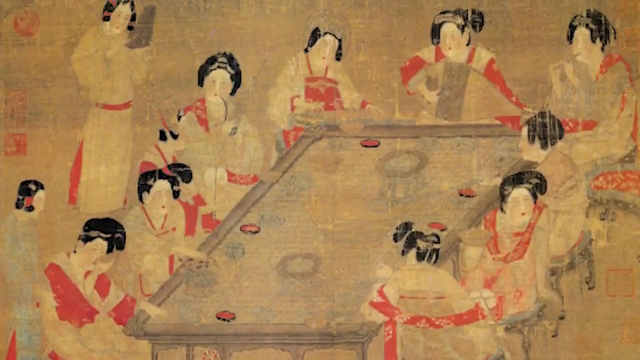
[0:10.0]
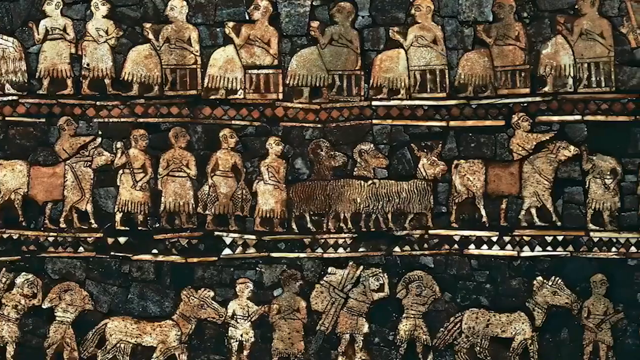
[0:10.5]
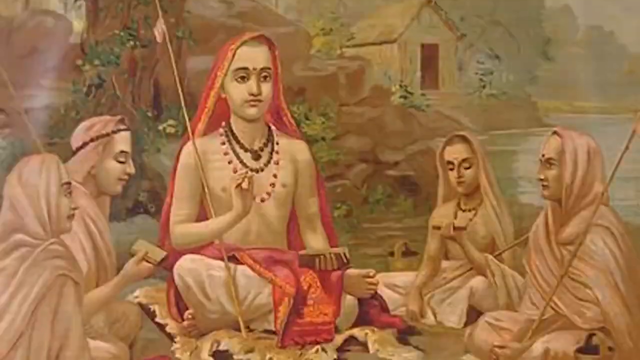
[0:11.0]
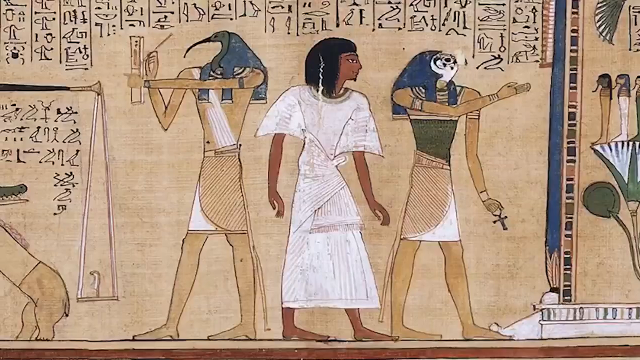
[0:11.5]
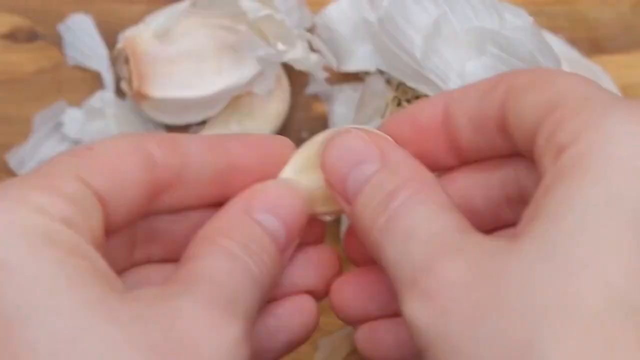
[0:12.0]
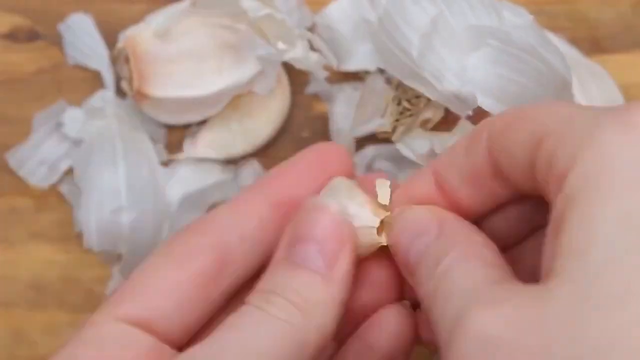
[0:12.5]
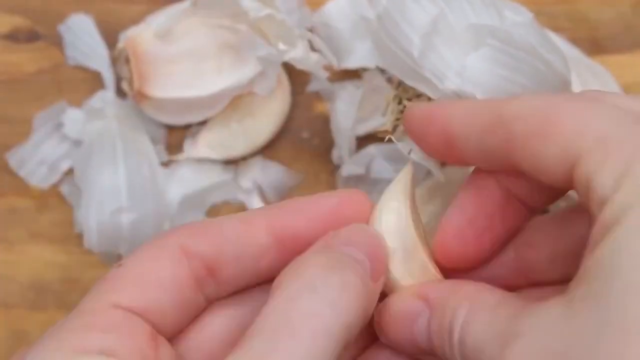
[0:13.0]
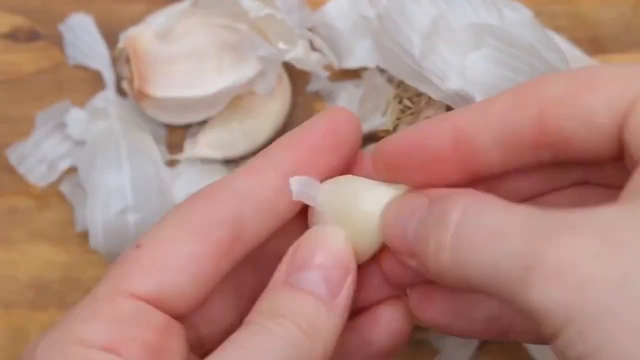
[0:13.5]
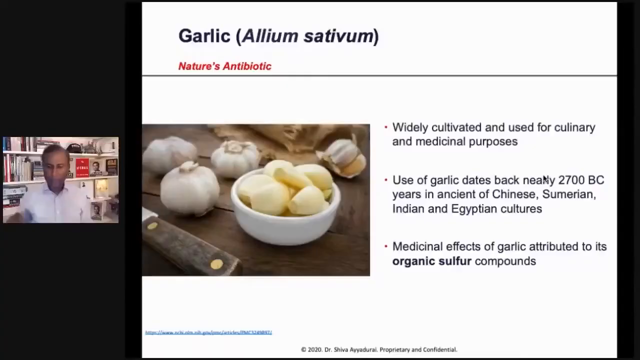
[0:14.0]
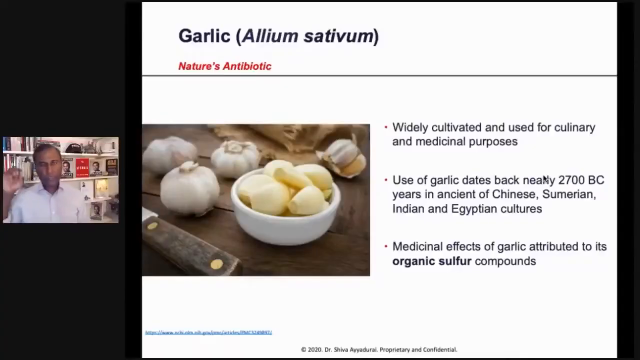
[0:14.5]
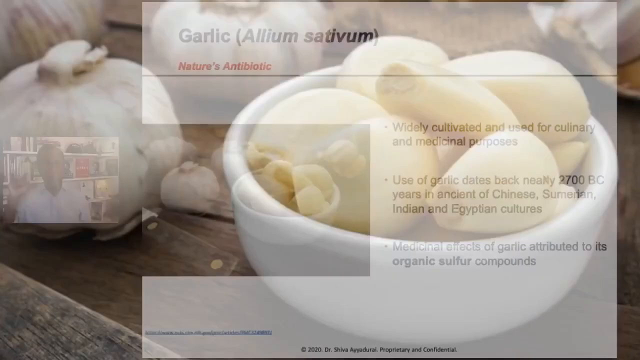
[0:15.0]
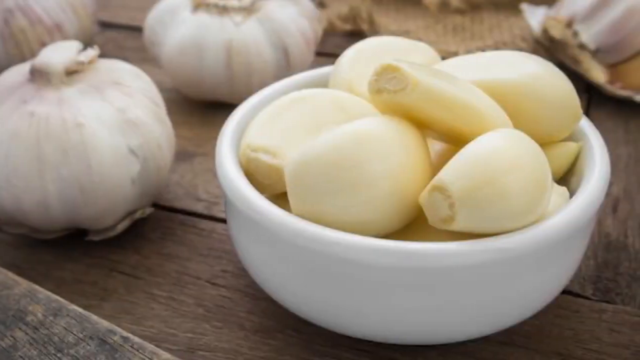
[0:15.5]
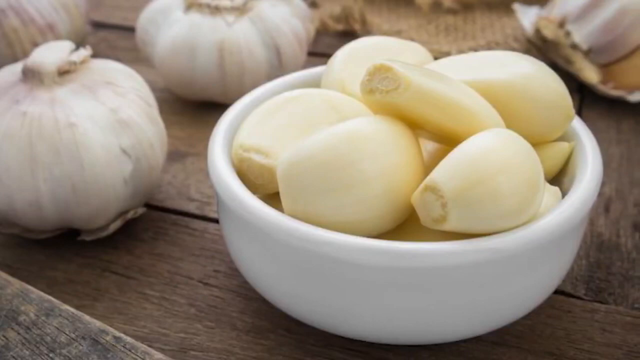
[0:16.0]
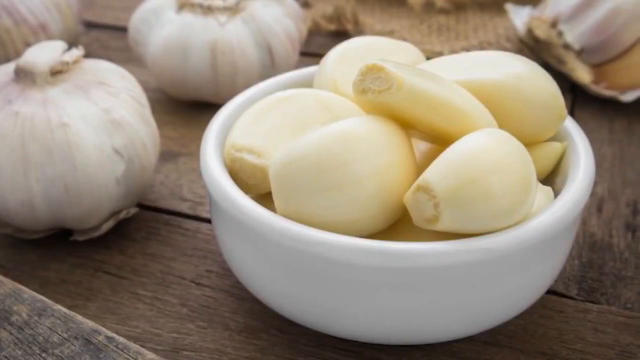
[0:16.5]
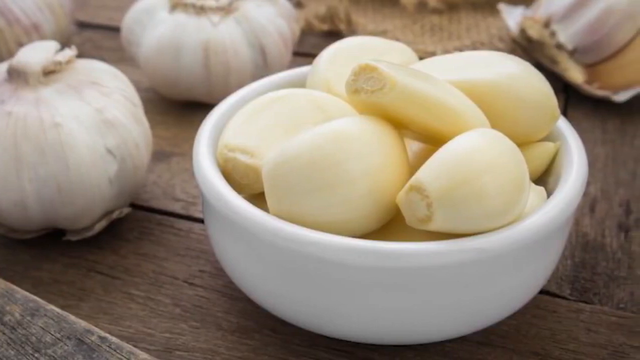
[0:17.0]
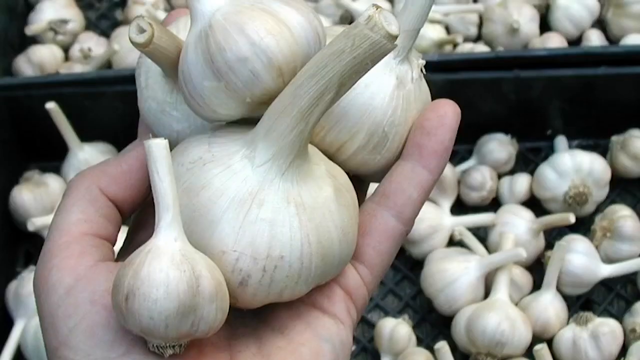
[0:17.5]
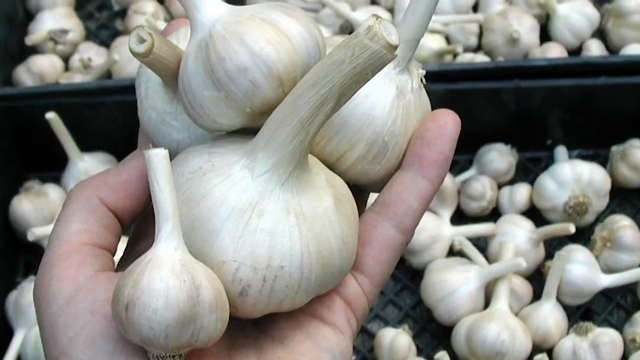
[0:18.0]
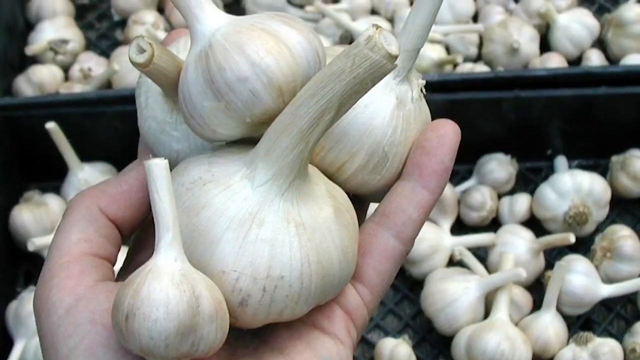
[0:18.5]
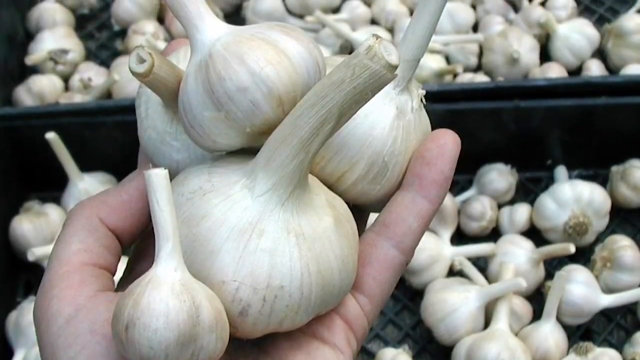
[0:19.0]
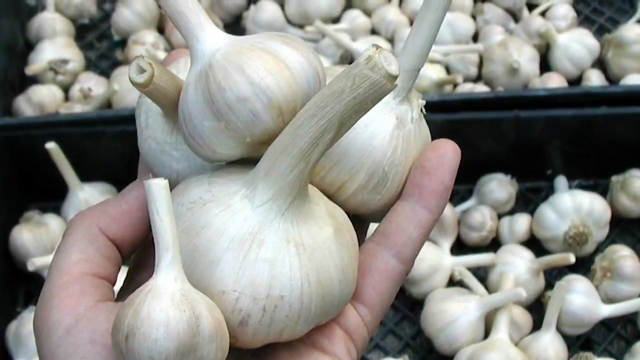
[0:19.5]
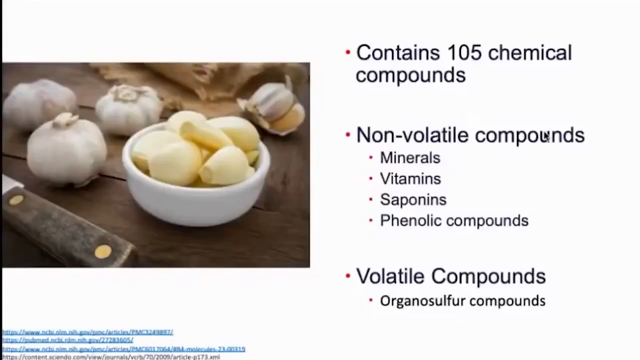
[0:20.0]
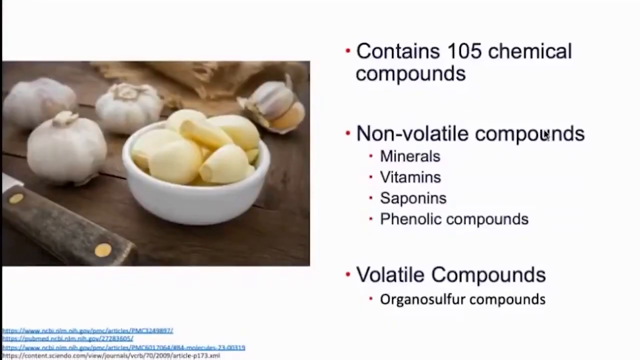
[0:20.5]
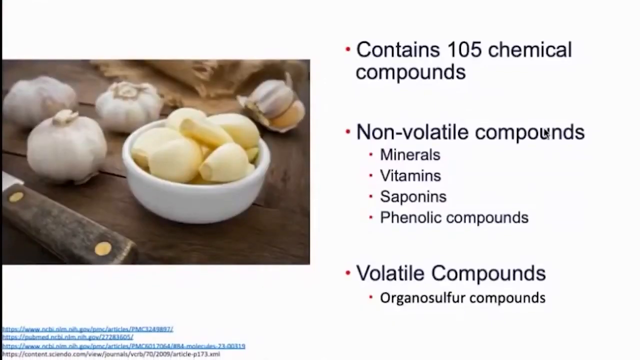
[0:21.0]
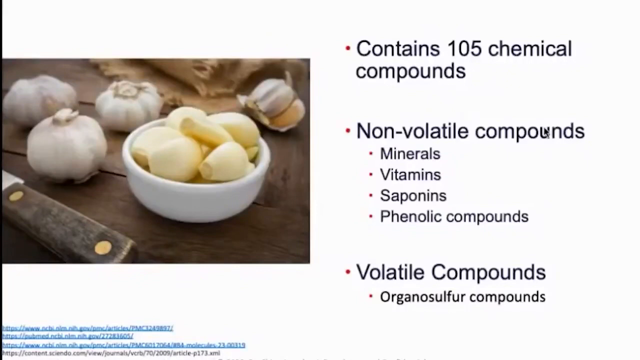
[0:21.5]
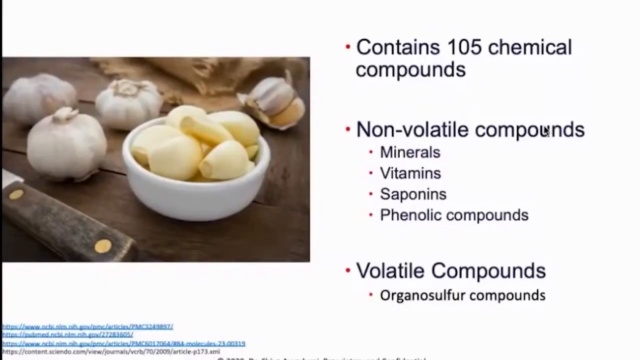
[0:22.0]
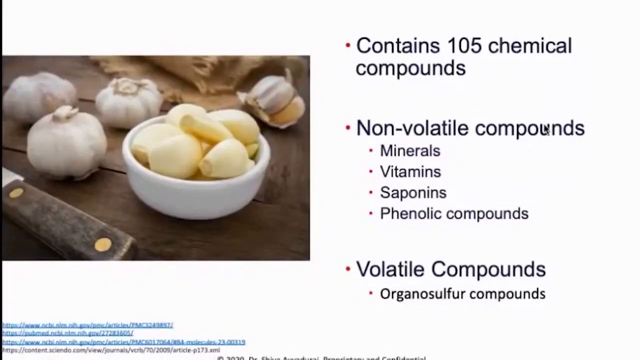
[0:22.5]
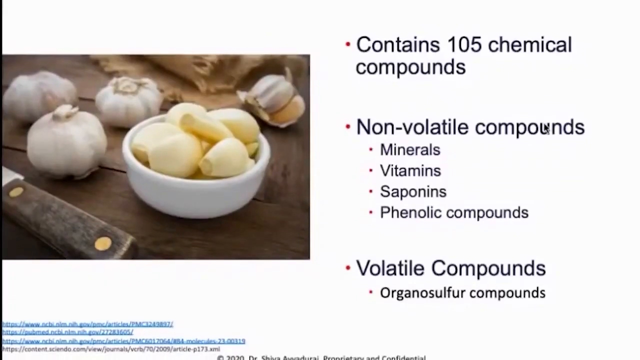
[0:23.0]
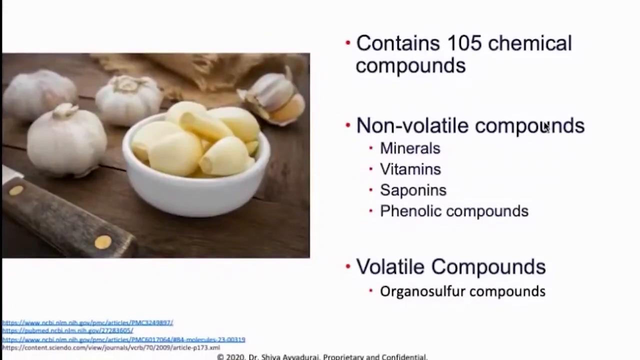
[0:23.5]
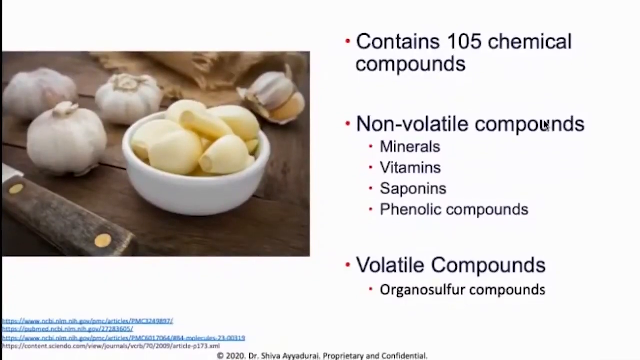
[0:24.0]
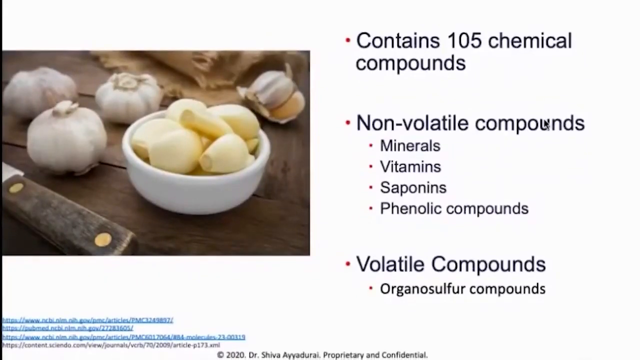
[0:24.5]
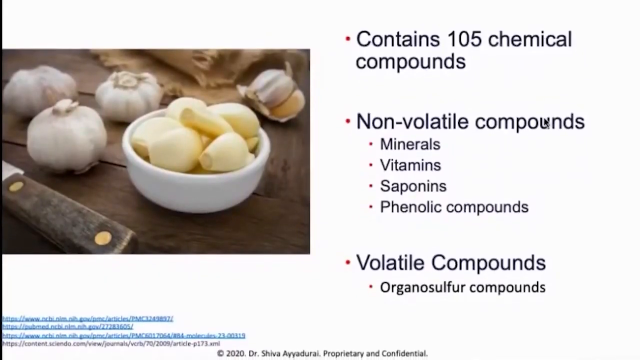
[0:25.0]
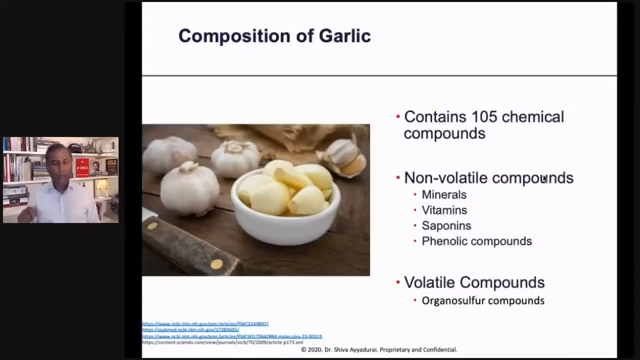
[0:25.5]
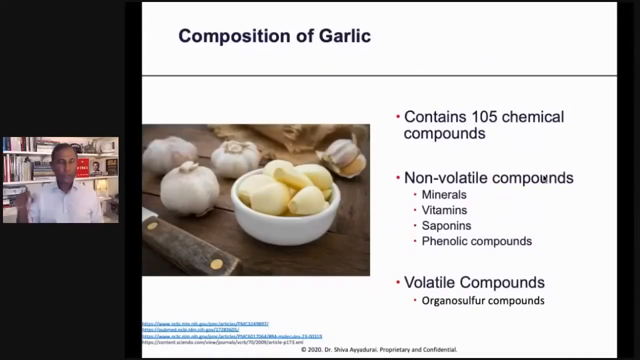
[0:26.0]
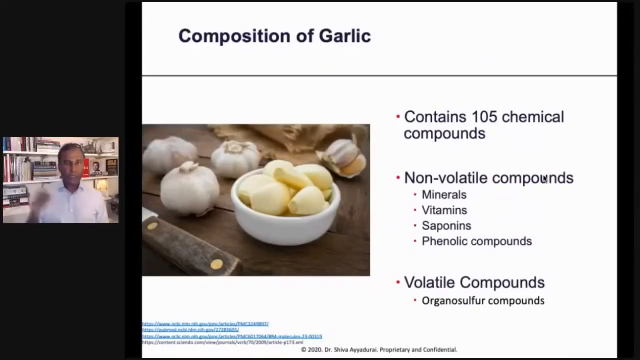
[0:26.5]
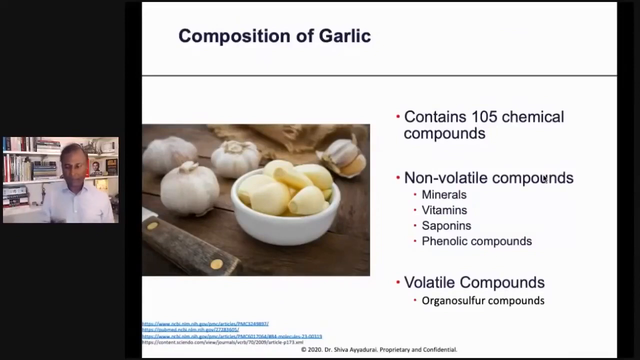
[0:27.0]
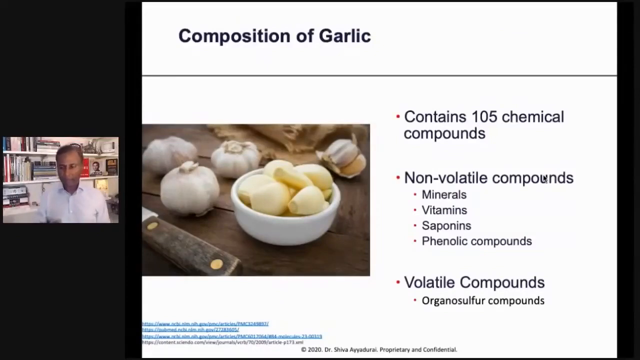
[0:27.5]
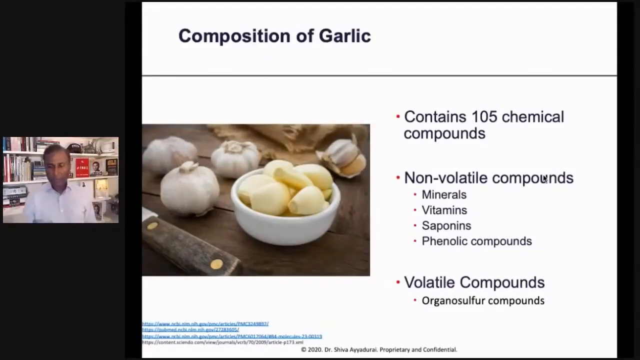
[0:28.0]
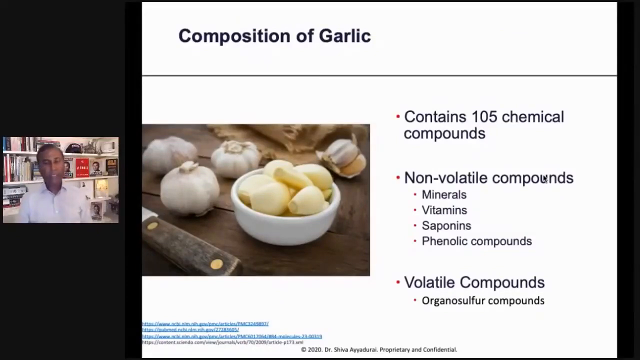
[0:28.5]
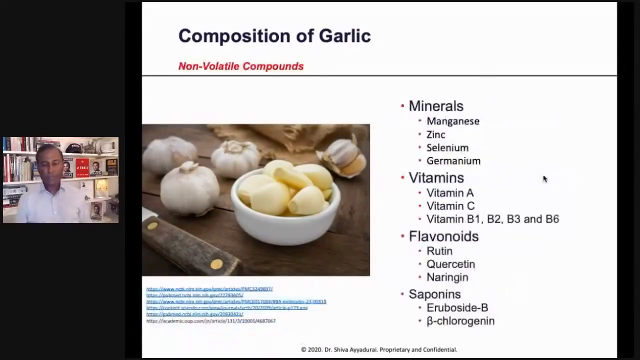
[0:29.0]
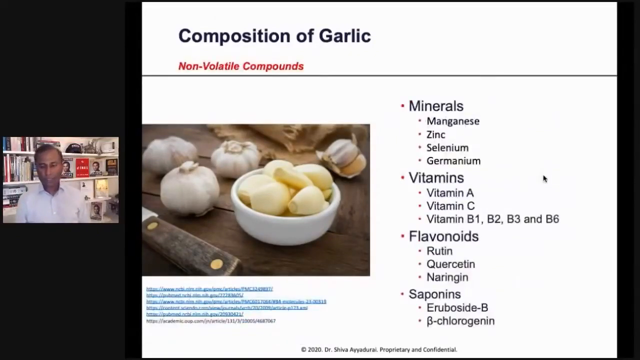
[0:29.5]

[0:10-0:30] A fast slideshow shows pictures from ancient China, Egypt, and Sumerian cultures, as mentioned on the PowerPoint, followed by a sped-up video of a person peeling a slice of garlic. The video returns to the PowerPoint page with the small video of the man talking, which then fades away. A close-up of the picture from the PowerPoint follows: a small white bowl of garlic slices with other pieces of garlic to be peeled all around on the wooden table. Another picture shows garlic pieces held in an open hand close to the camera, with many other garlic pieces all around behind the hand. The video then changes to another PowerPoint page that takes up the whole screen. On the left is the same image of garlic slices in a white bowl, and on the right are three text points: "contains 105 chemical compounds"; "non-volatile compounds", with a list of the compounds underneath; and "volatile compounds", with specifications underneath. The PowerPoint page then shrinks a little to fit the video of the man talking on the left of the screen, as before.